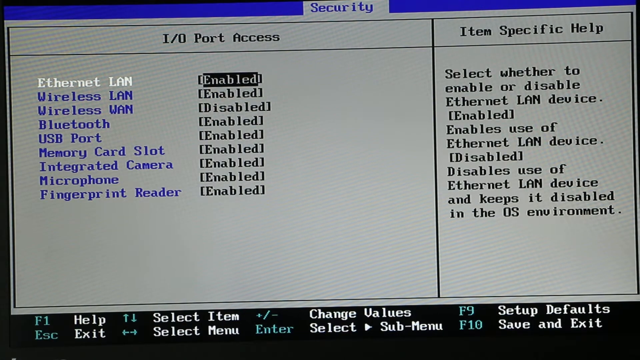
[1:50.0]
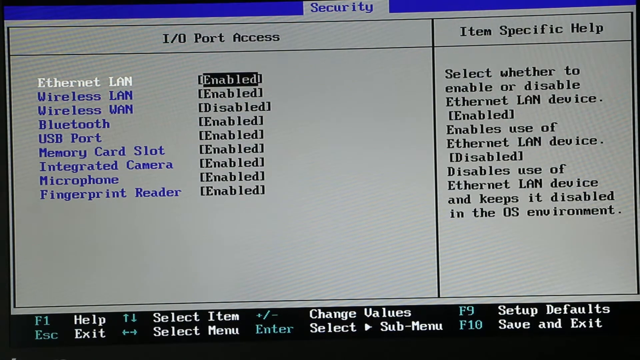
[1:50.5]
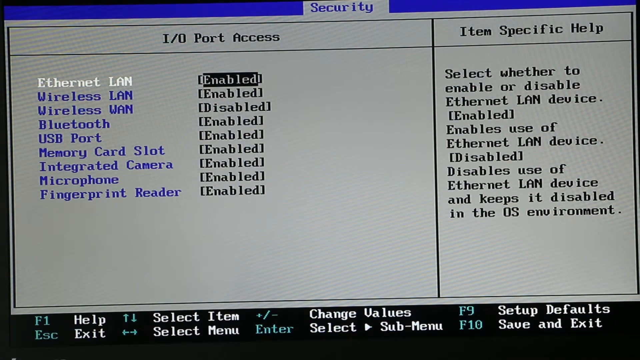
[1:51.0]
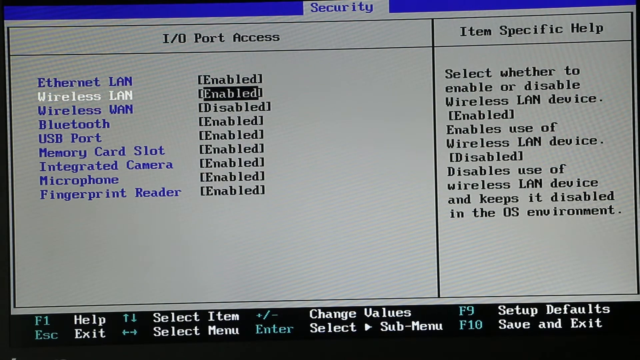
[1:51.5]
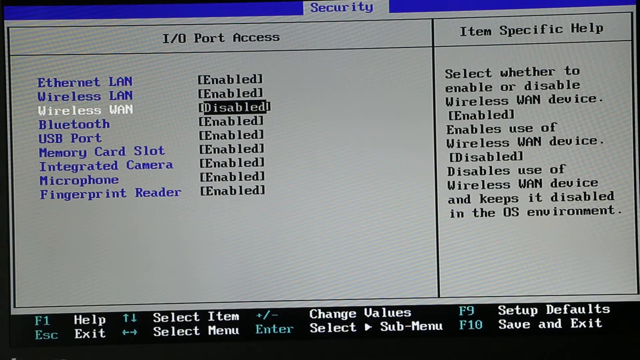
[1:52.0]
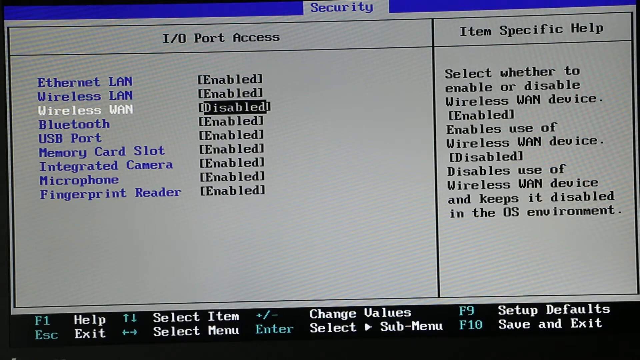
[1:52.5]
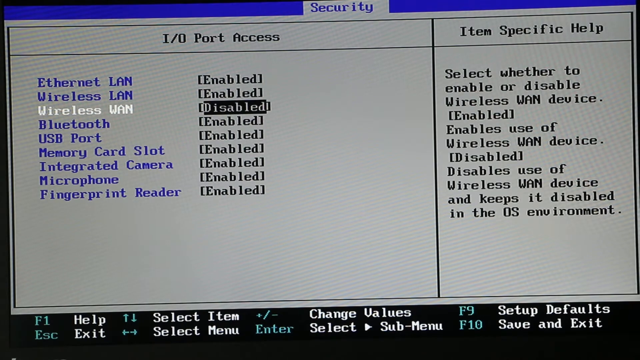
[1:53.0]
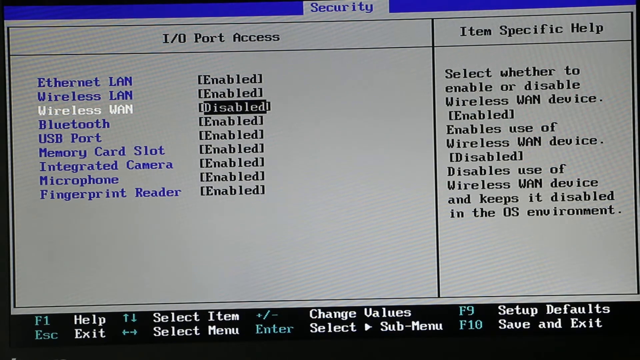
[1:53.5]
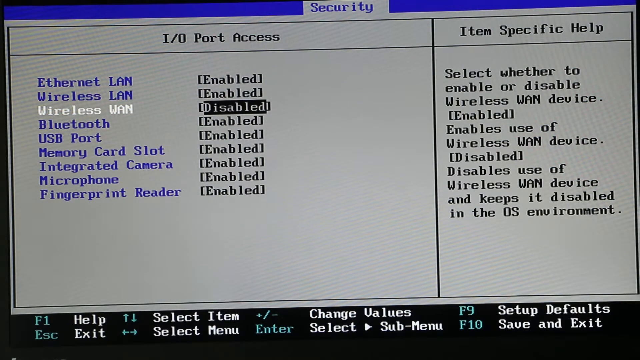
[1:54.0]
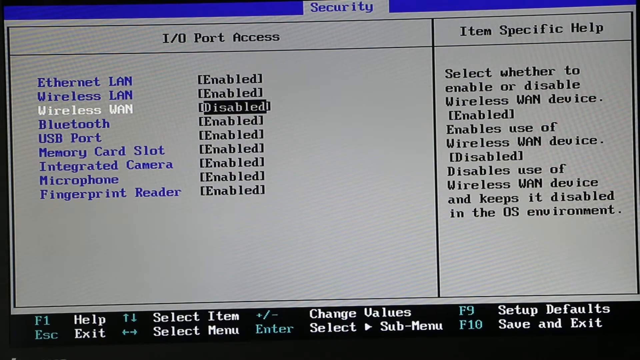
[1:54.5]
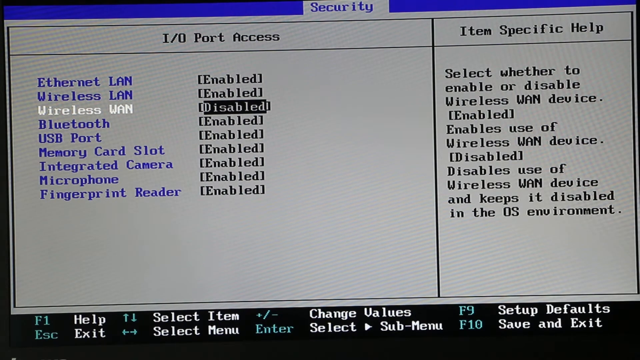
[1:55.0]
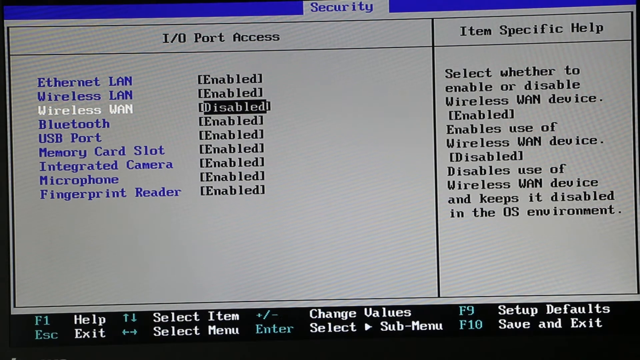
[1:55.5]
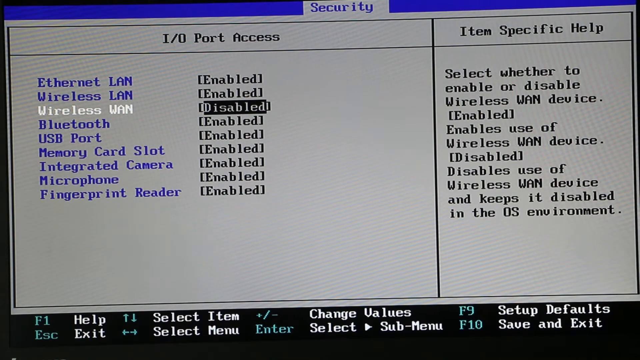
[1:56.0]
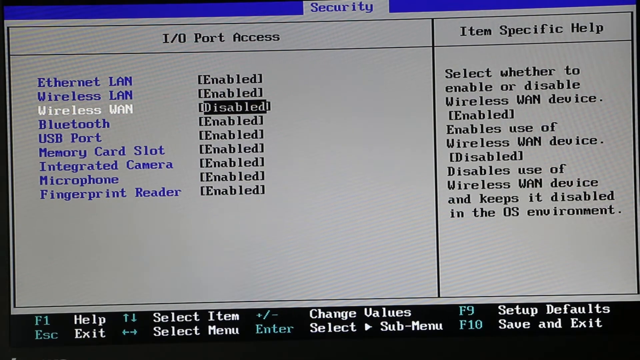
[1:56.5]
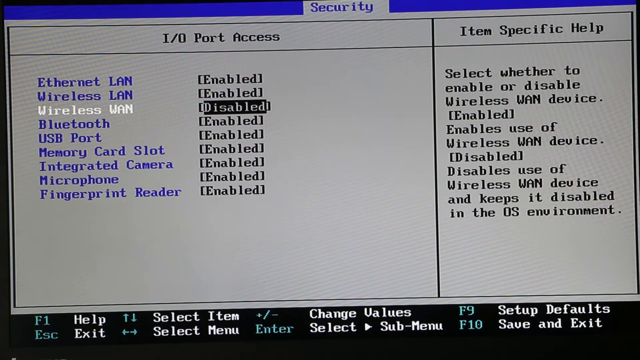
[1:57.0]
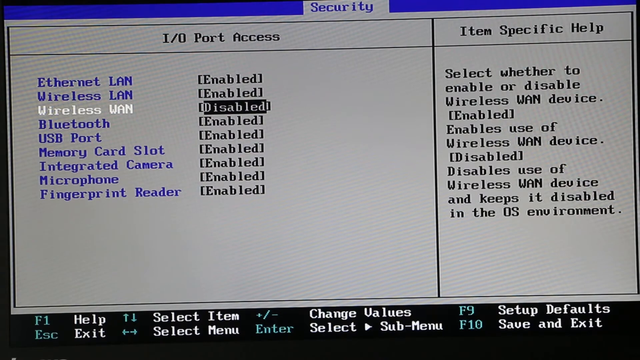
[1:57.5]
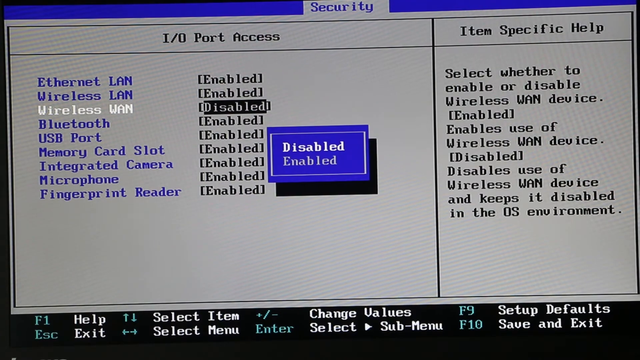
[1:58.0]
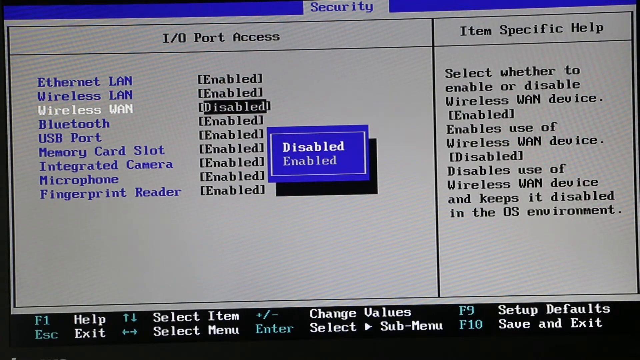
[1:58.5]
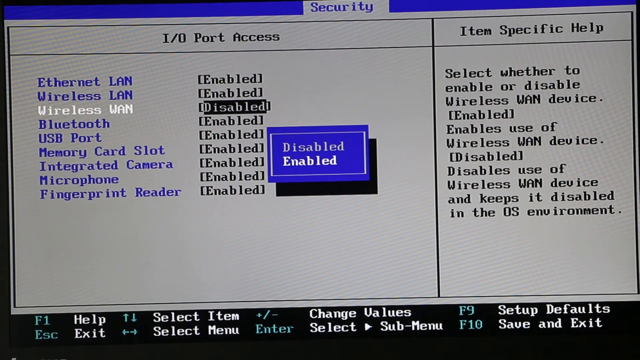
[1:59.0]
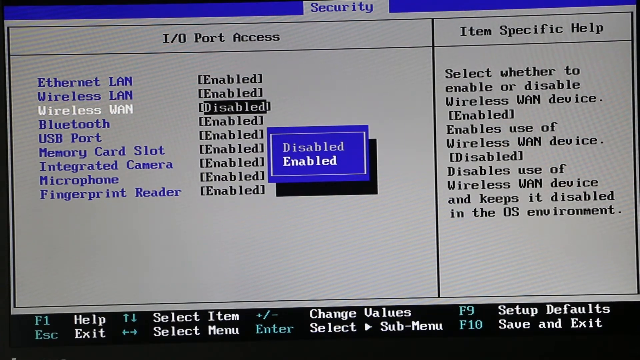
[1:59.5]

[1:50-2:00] The user is still in the Security section of the settings, in the I/O Port Access menu. A list of port access points is shown, and the user tabs through Ethernet LAN, Wireless LAN and Wireless WAN. Wireless WAN is shown as disabled, while all the other options are shown as enabled. The user tabs to the disabled option and presses Enter, and a blue text box appears in the center of the screen where the user can choose to keep Wireless WAN disabled or enable it. On the right side of the menu, a Help section explains how to use the menu options.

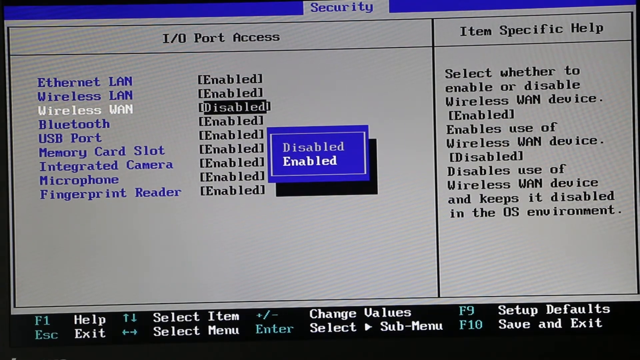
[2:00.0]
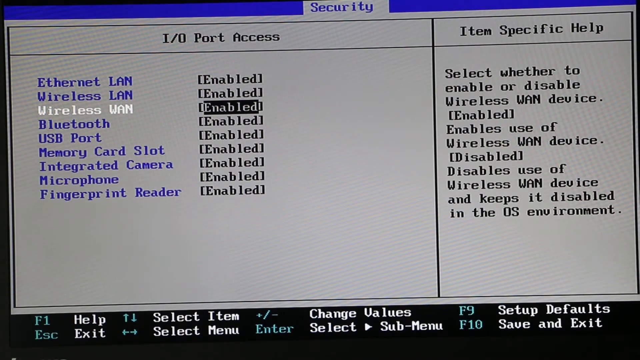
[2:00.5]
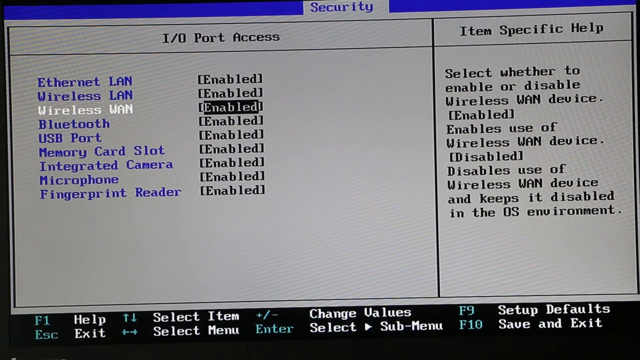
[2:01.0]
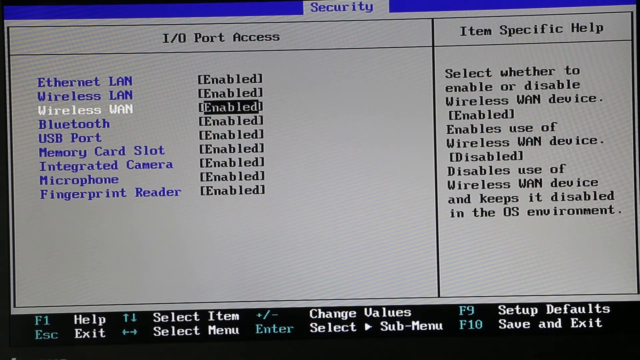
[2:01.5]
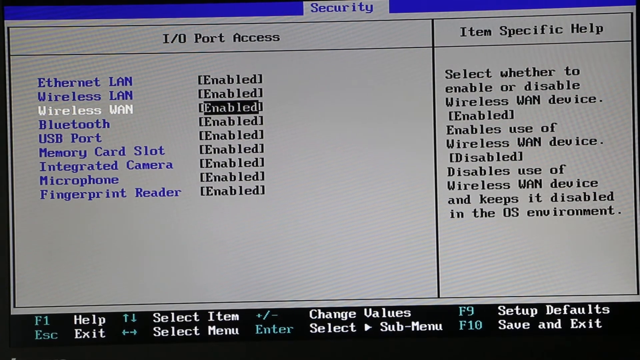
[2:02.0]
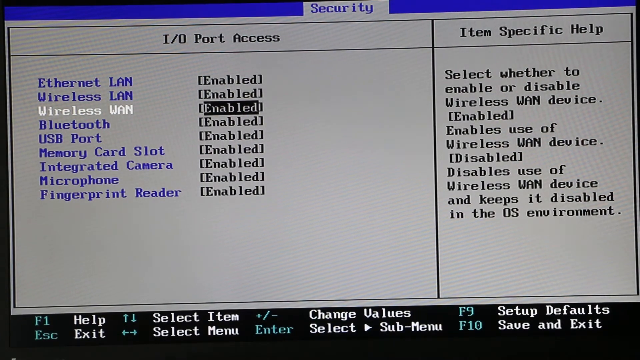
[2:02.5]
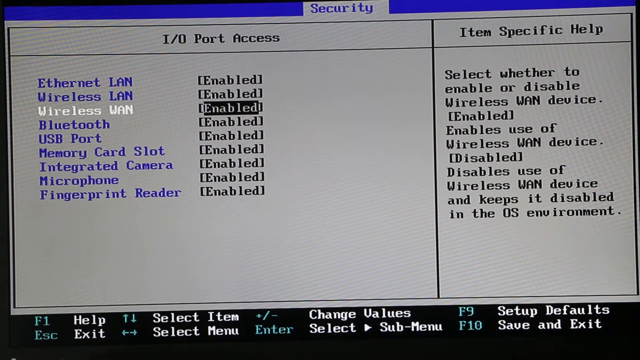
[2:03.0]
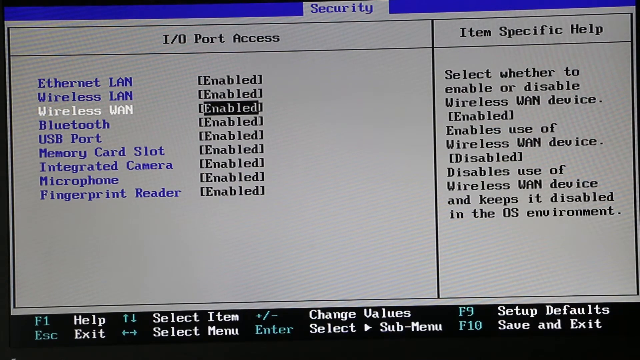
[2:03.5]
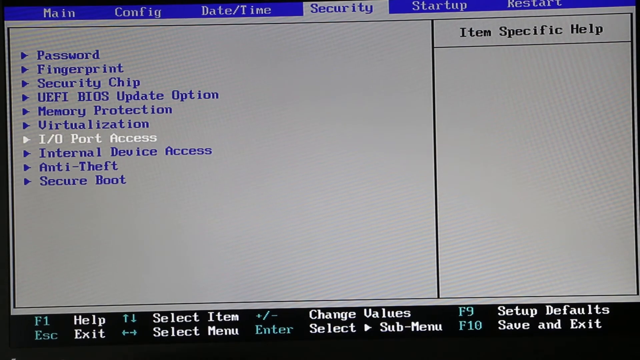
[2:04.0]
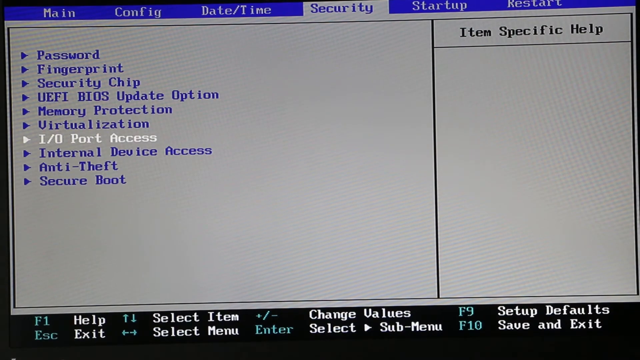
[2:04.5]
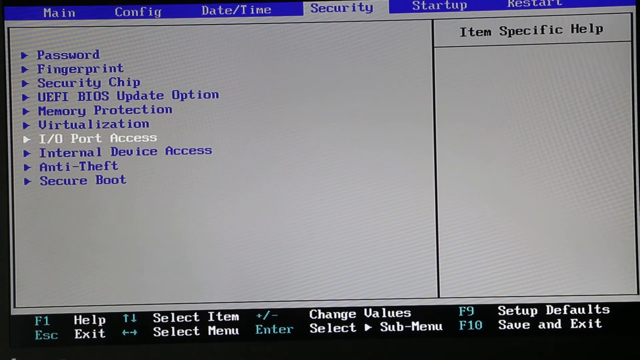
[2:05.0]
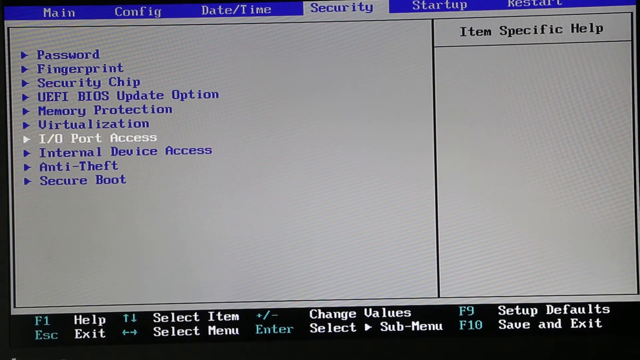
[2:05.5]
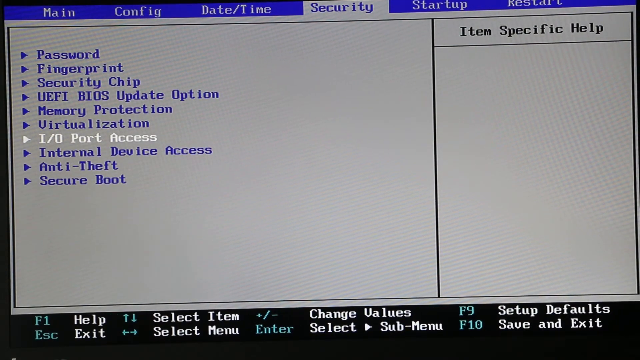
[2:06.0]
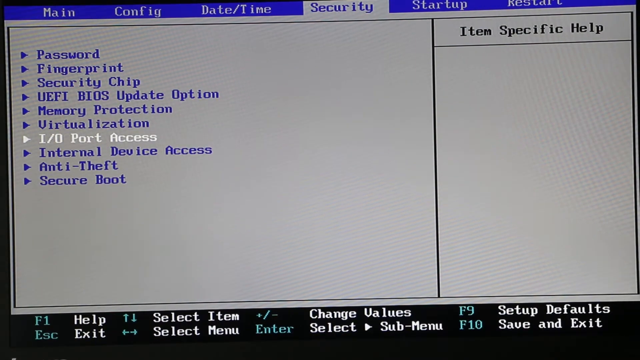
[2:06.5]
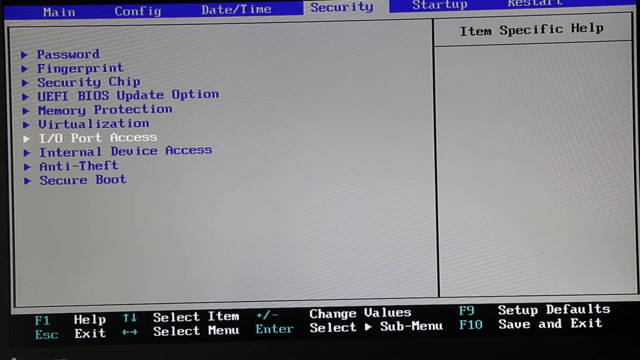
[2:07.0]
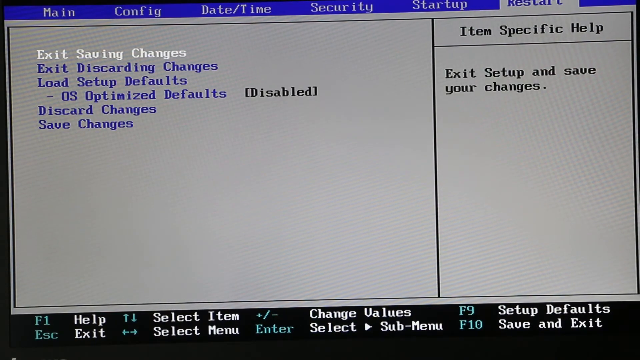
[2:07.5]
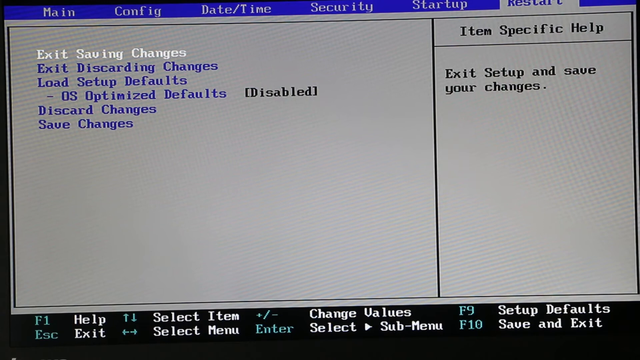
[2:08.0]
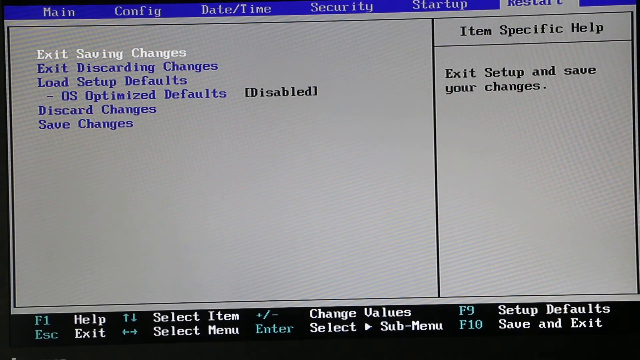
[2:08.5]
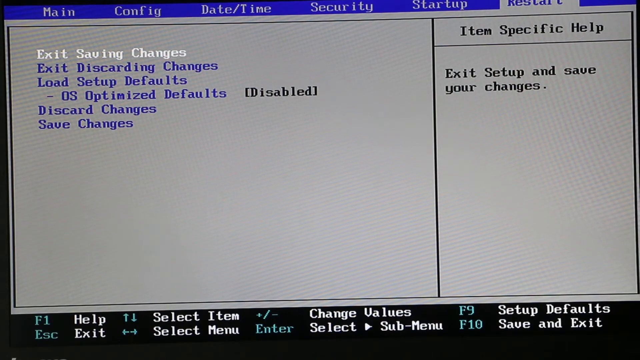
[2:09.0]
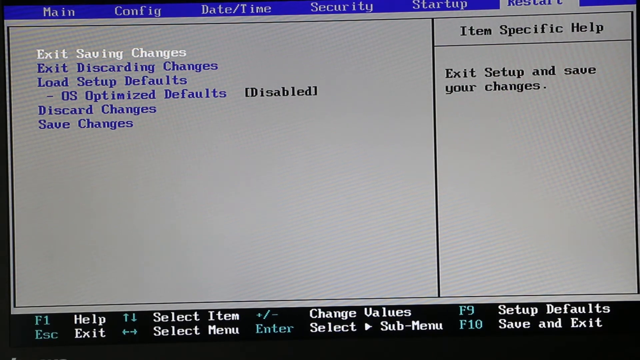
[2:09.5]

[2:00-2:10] The user has gone back to the Security menu. I/O Port Access is still highlighted, and the item-specific help menu has disappeared. The user appears to use the function keys to move across the blue menu bar at the top to go to save and exit, and Wireless WAN is now enabled. The user goes to the Restart menu, with "Exit Saving Changes" highlighted. The item-specific help information has appeared on the right side of the screen, explaining that this option will let the user exit setup and save their changes.